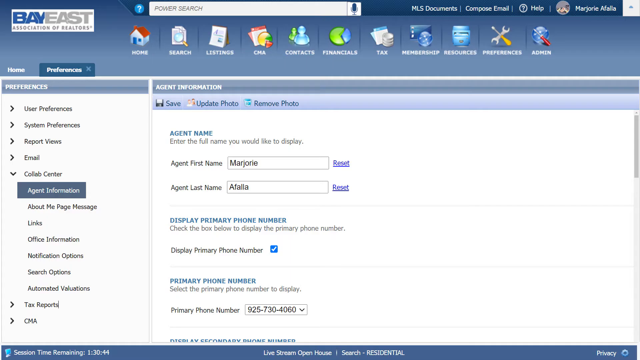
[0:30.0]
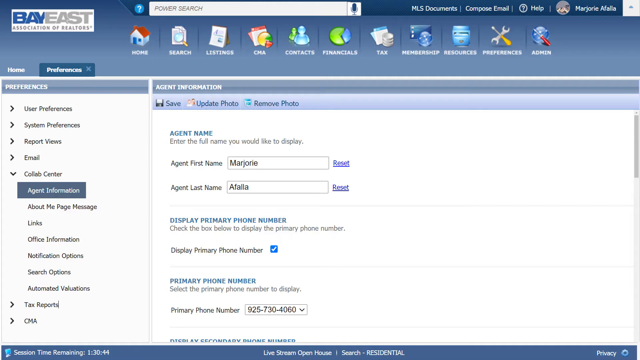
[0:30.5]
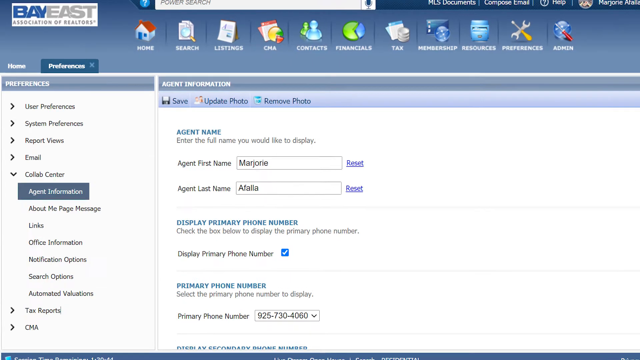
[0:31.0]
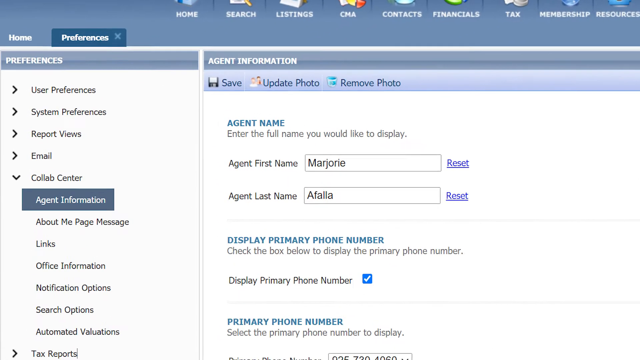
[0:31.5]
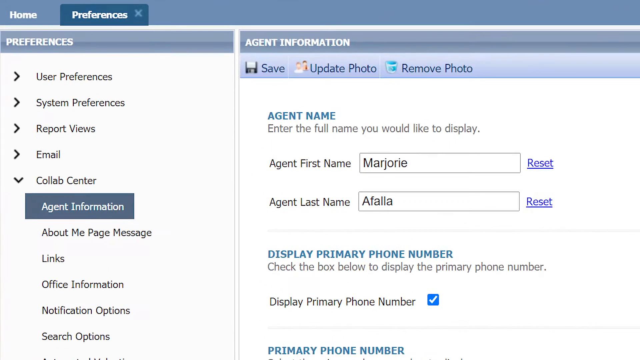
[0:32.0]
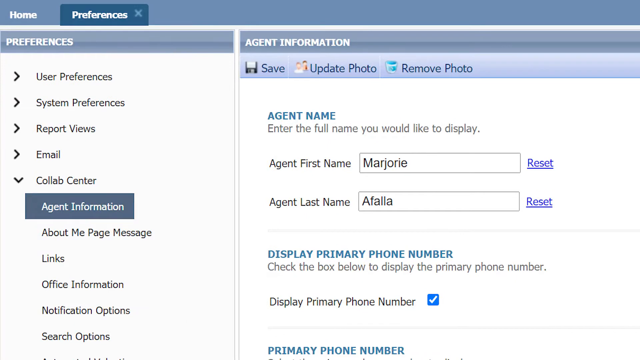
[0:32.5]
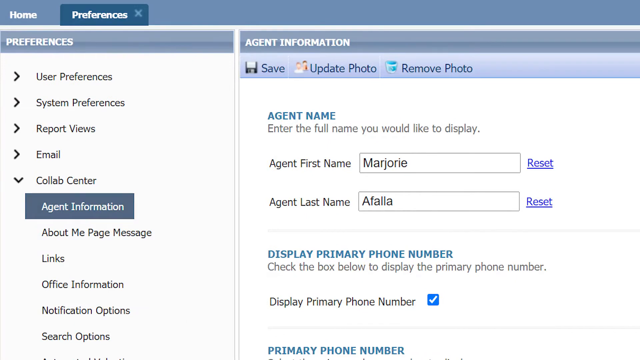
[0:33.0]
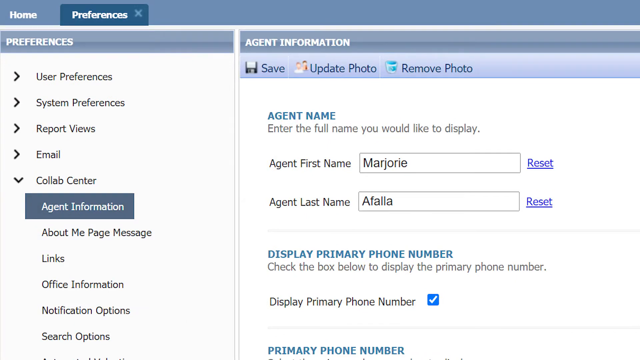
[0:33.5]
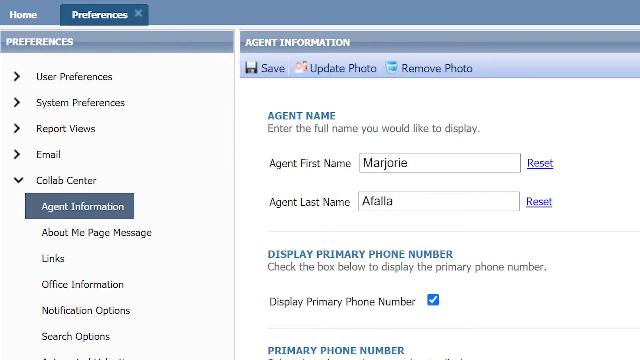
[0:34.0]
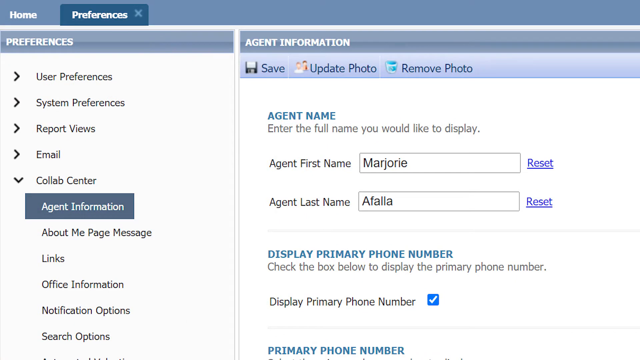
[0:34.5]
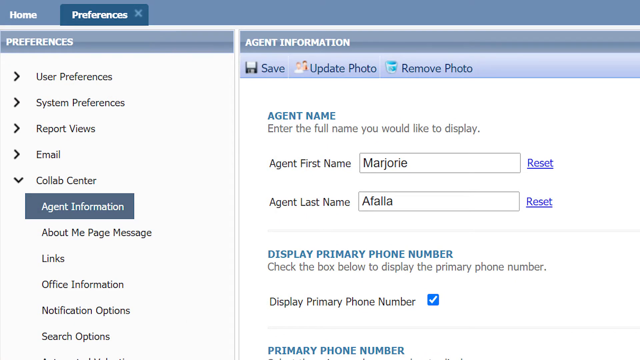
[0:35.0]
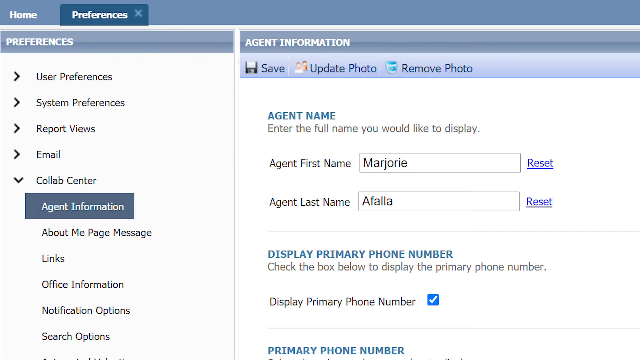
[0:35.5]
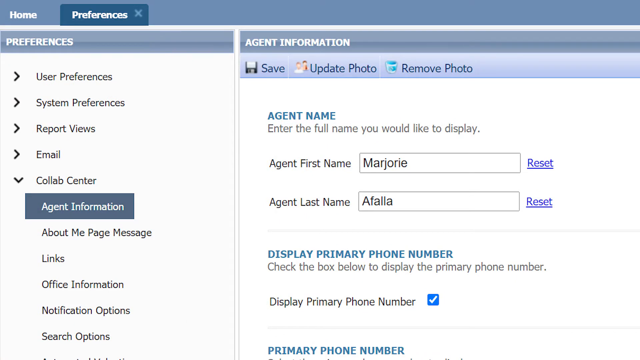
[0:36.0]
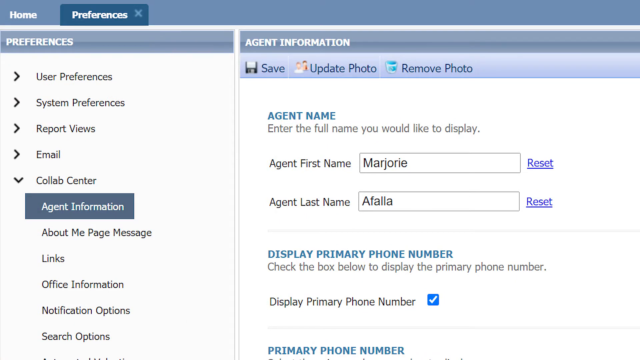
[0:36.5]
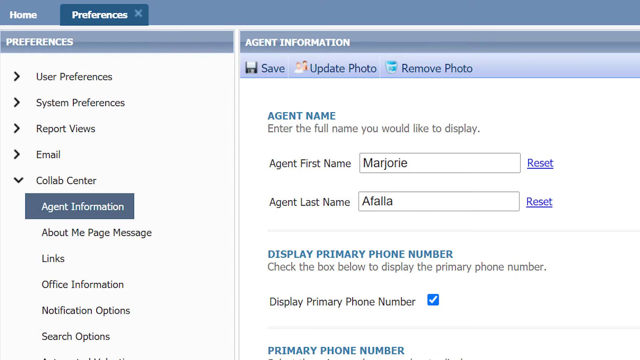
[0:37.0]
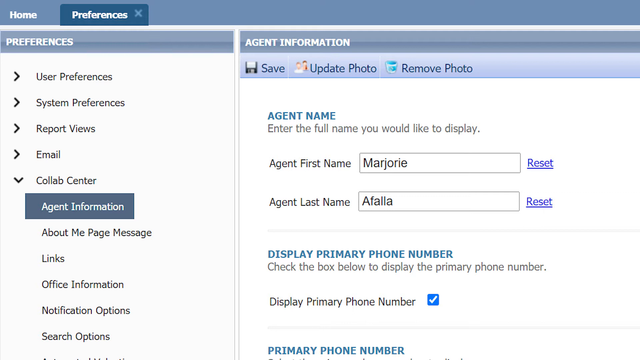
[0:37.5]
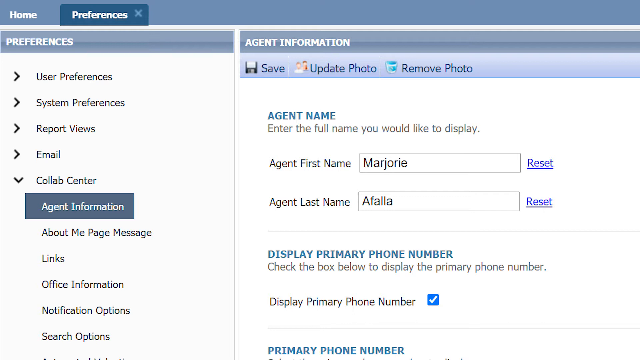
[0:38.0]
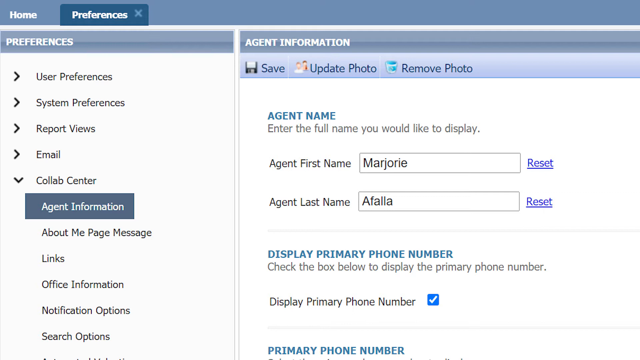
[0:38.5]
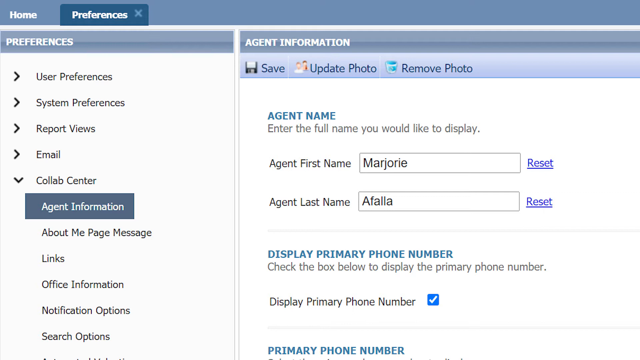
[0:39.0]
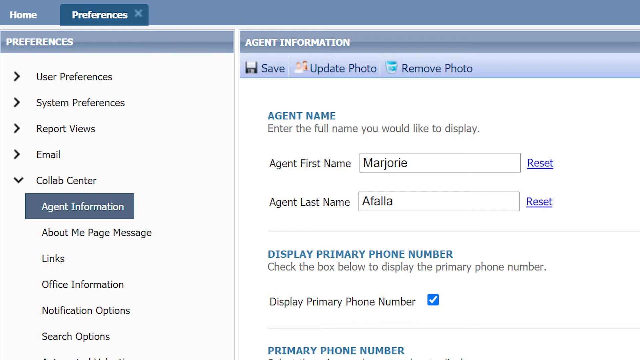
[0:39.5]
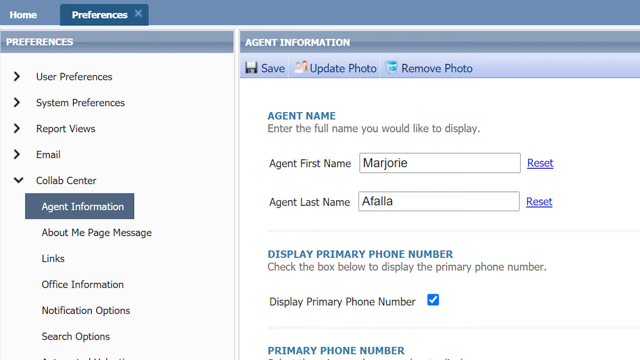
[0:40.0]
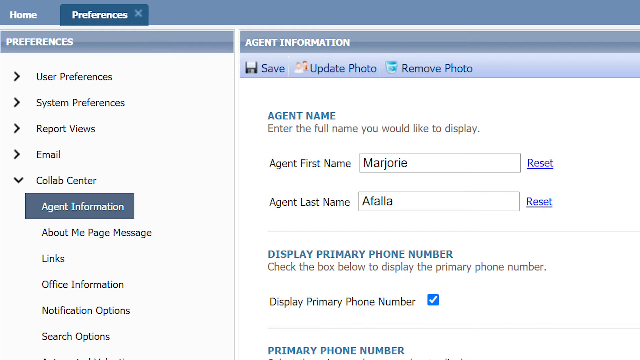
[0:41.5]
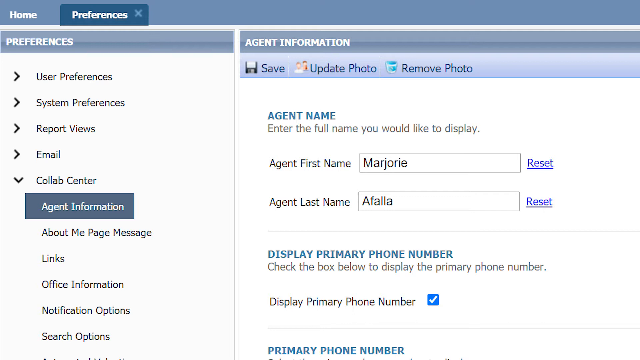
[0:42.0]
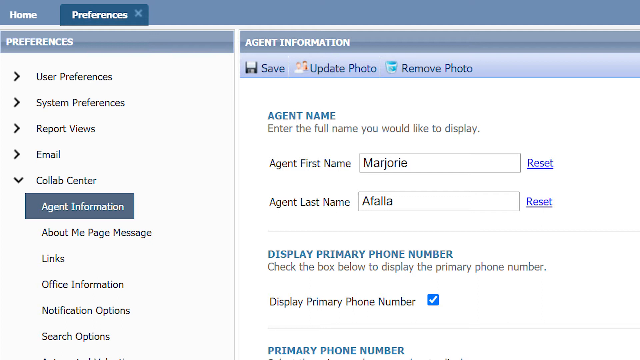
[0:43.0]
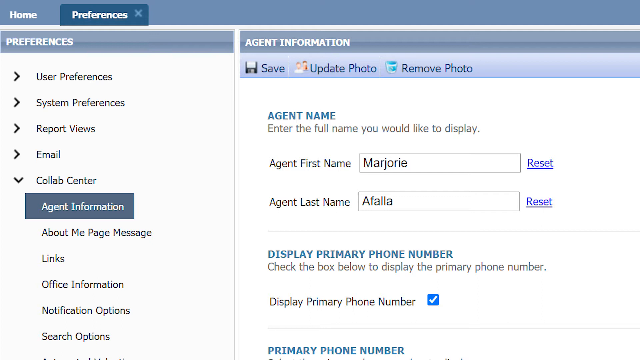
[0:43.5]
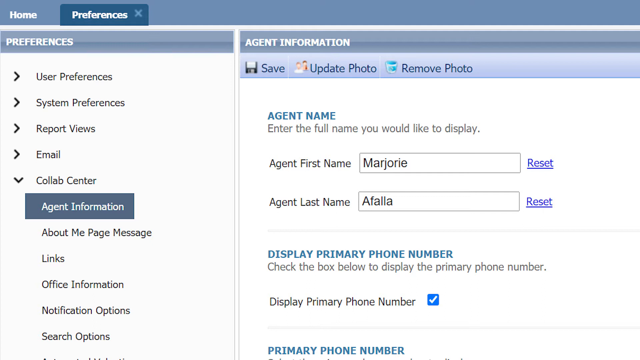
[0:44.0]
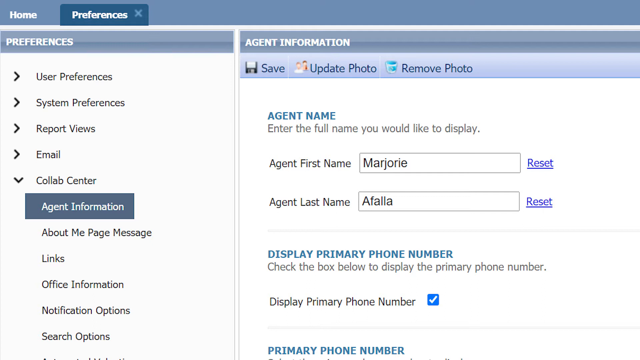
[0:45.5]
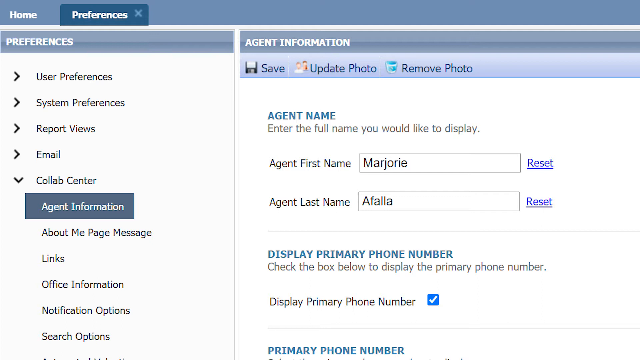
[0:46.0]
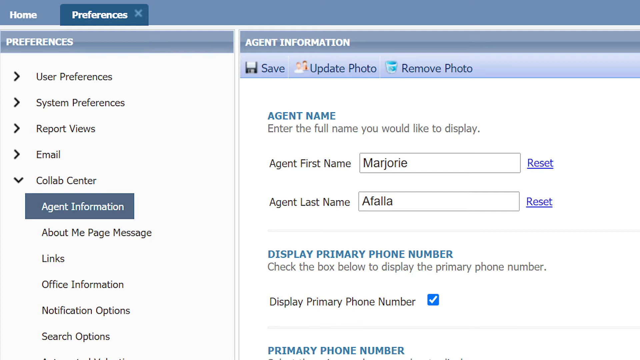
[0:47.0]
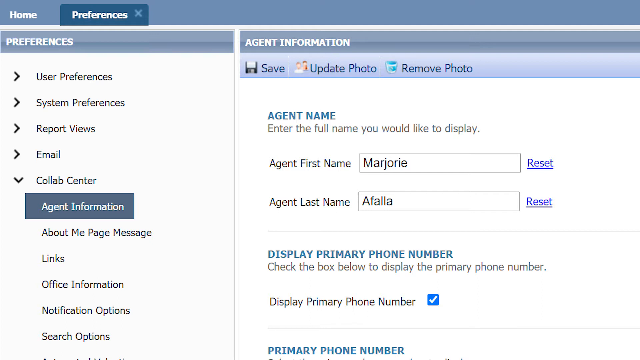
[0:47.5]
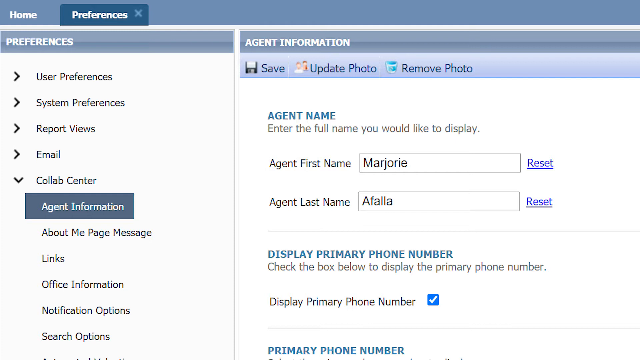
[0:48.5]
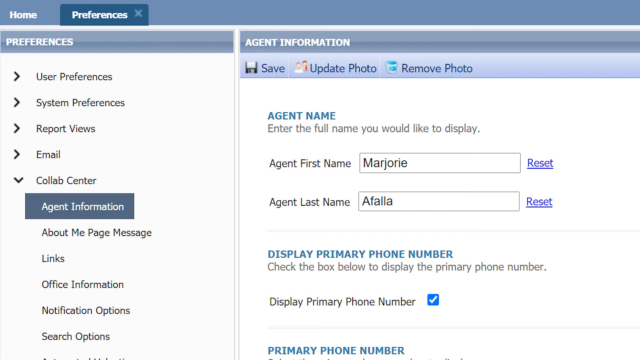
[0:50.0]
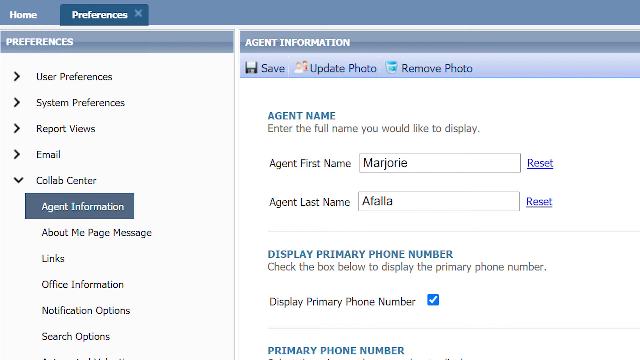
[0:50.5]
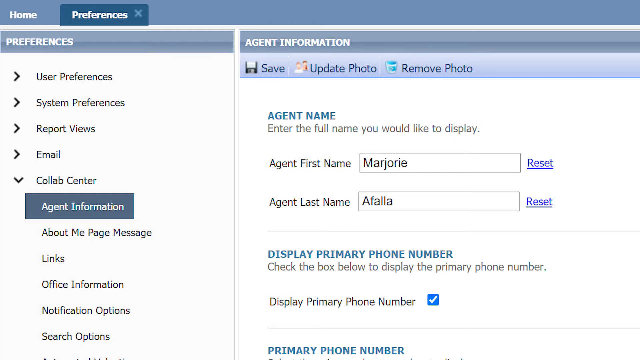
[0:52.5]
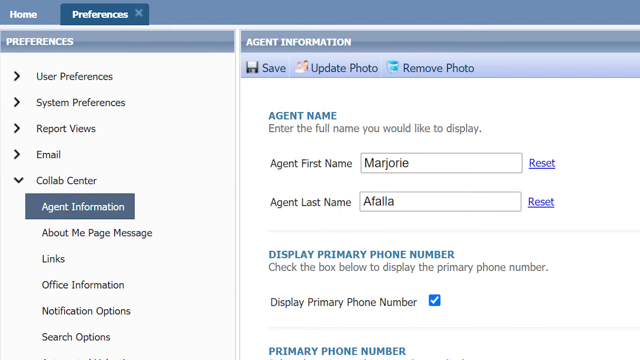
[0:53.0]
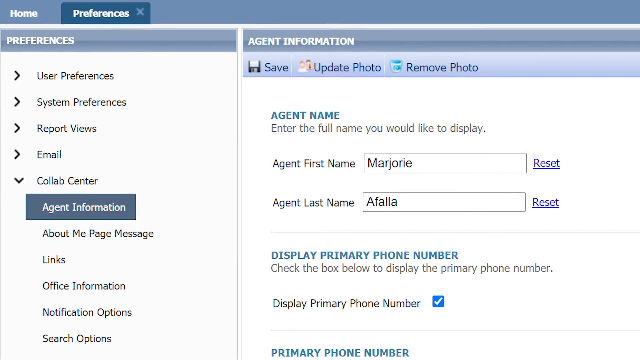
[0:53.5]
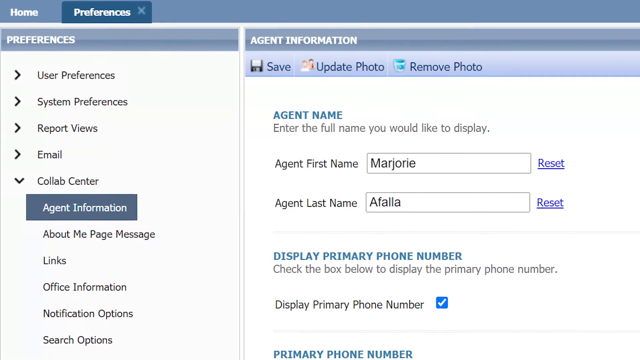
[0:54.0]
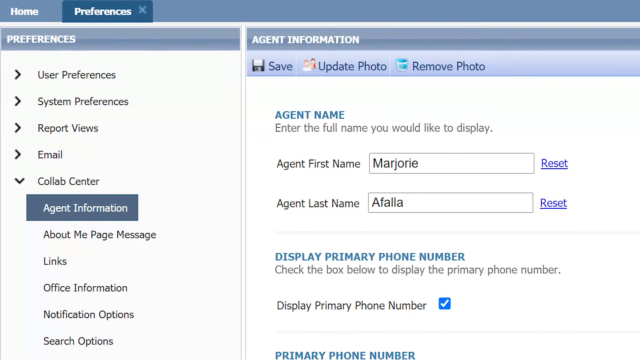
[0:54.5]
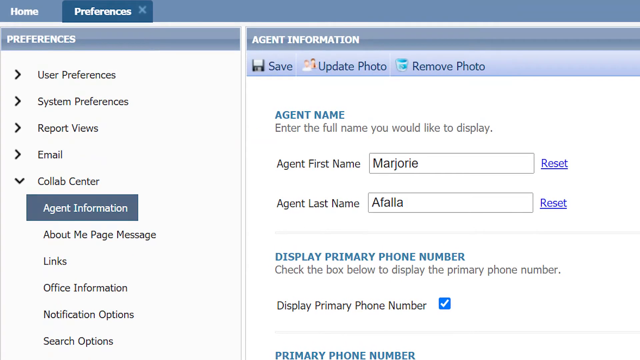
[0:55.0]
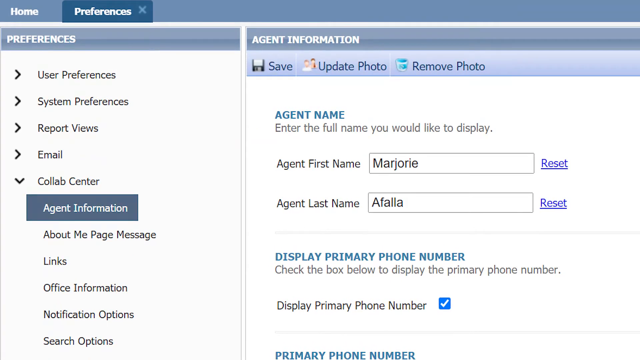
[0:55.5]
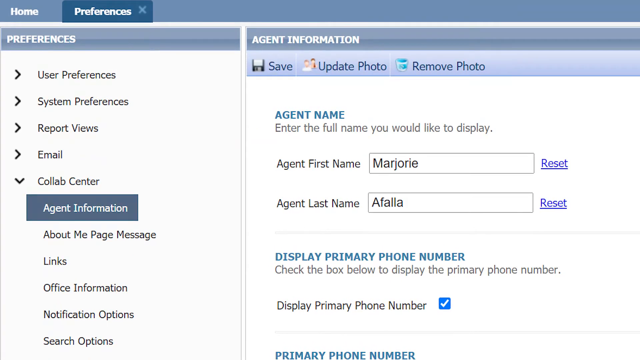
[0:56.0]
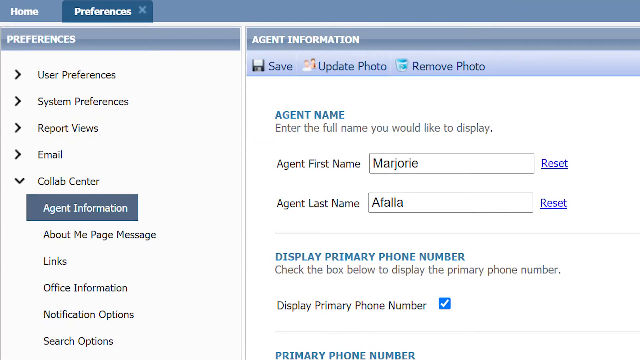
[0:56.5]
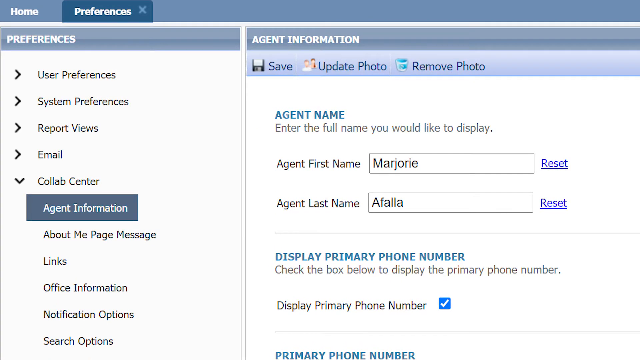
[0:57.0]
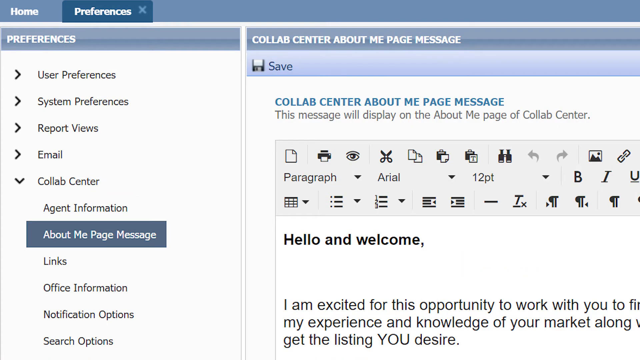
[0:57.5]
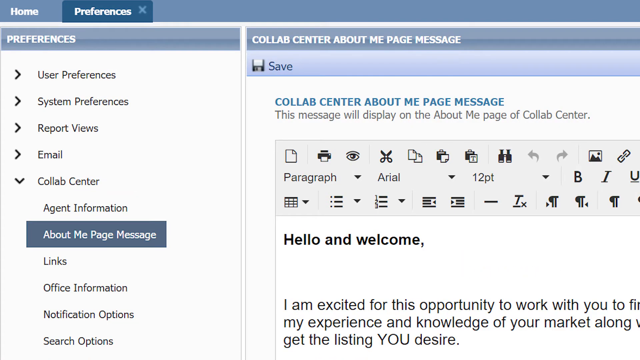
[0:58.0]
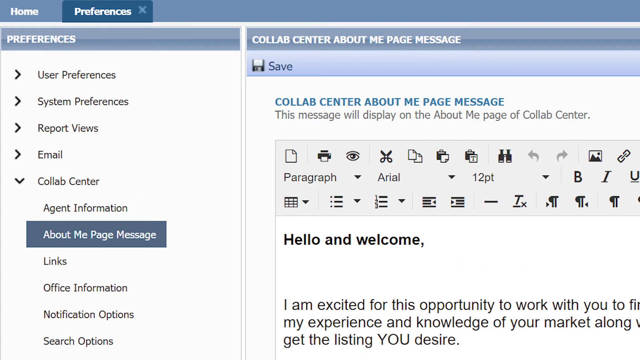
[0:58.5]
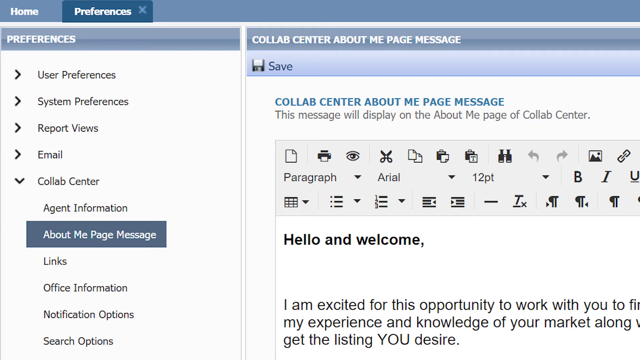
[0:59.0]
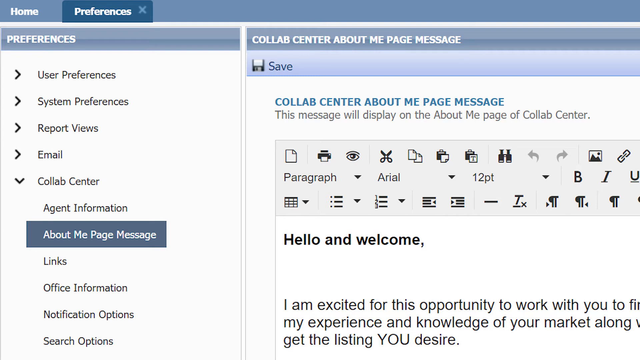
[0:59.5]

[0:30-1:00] The Bay East application shows a set of tabs on the left side. Under the preference options are several entries with drop-down arrows: user preferences, system preferences, report views, emails, and collab center. The arrow for collab center is clicked and turns to point down, revealing options for agent information, about me, my page messages, links, office information, notification options, search options, and what seems to be automated valuations. Agent information is selected, and another screen pops up on the side with options to save, upload photos, remove photos, and enter an agent name; the first name appears to be Margie and the last name Ophelia. The only other item is display primary phone number, which is checked. Nothing is saved or changed further on the page.